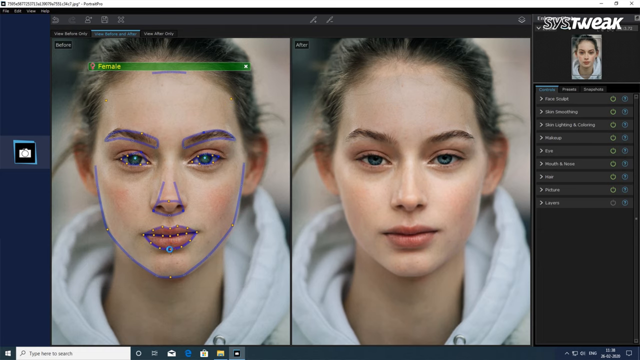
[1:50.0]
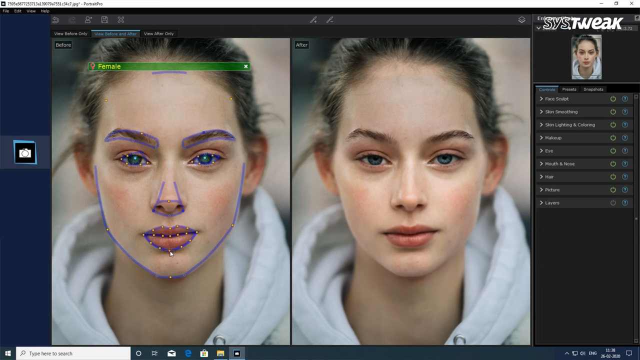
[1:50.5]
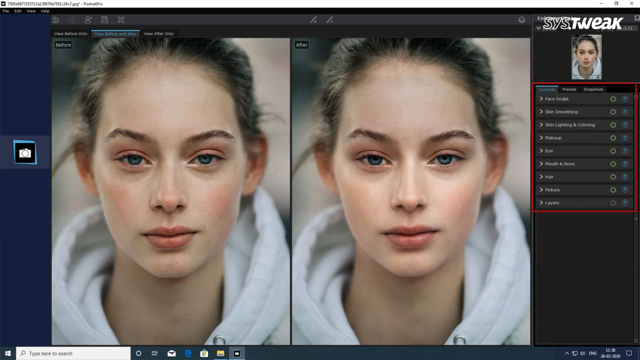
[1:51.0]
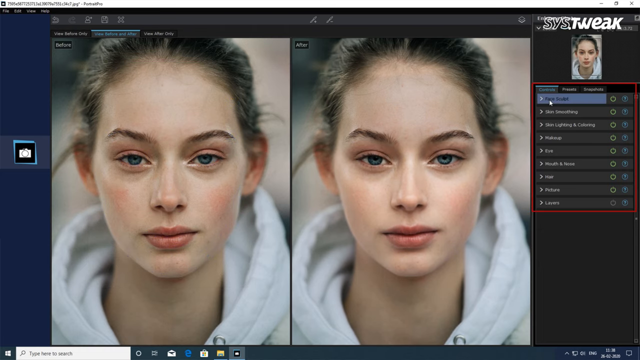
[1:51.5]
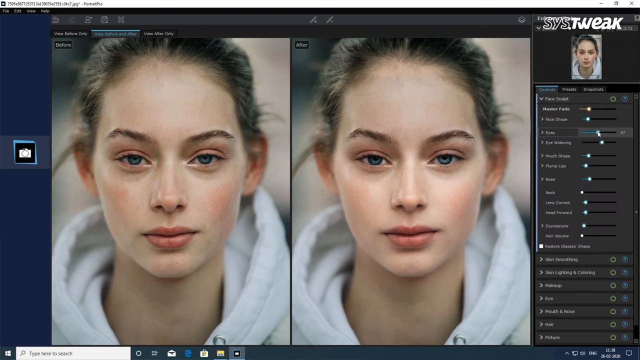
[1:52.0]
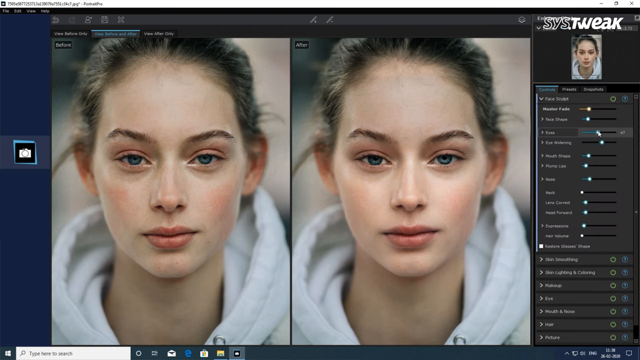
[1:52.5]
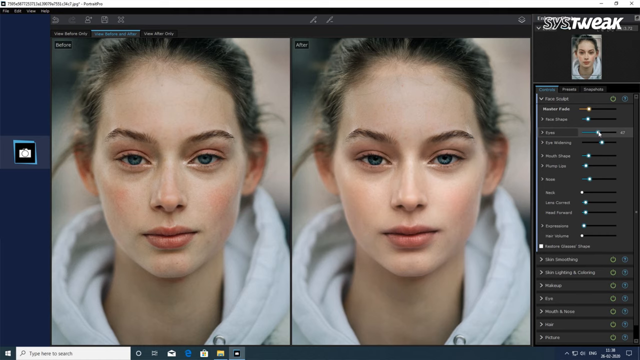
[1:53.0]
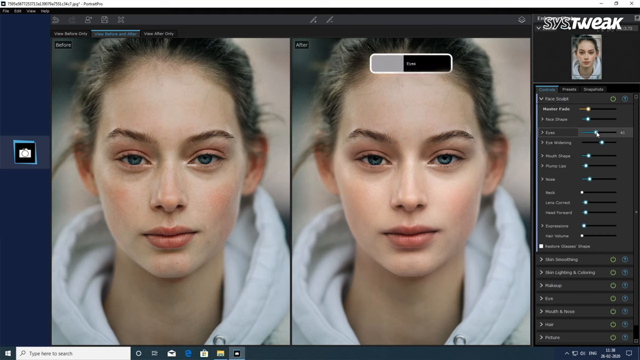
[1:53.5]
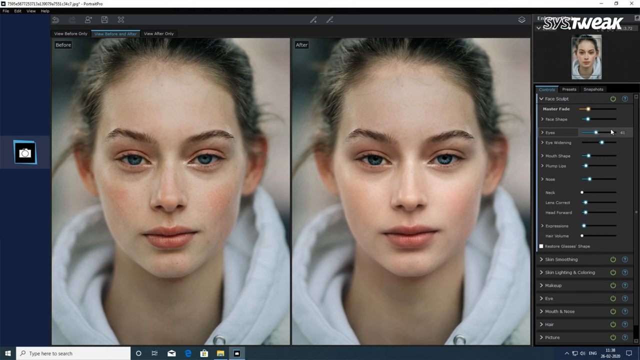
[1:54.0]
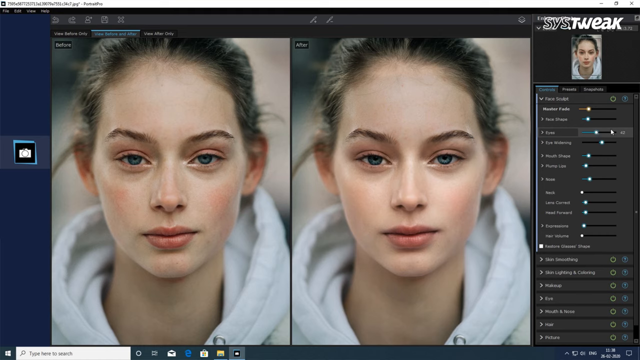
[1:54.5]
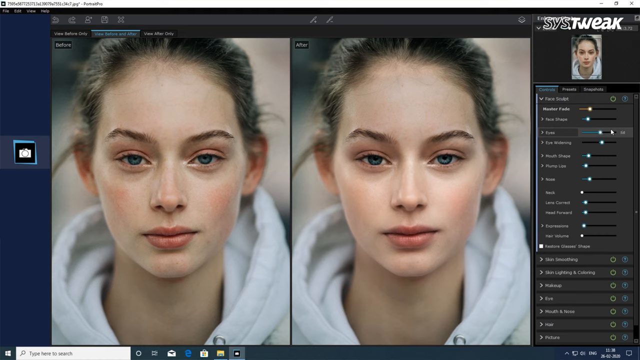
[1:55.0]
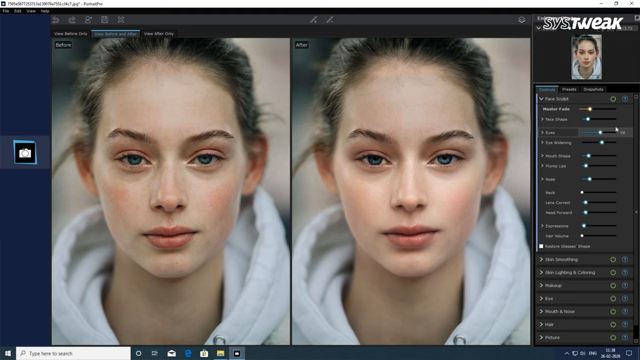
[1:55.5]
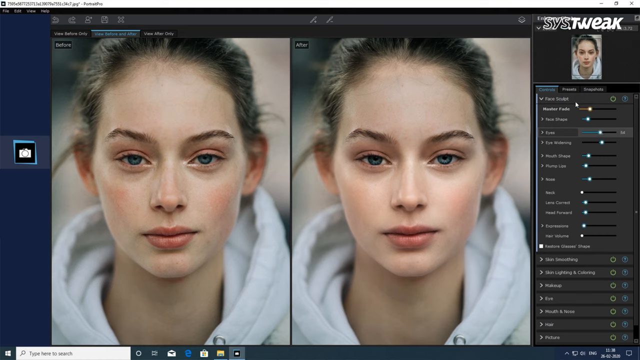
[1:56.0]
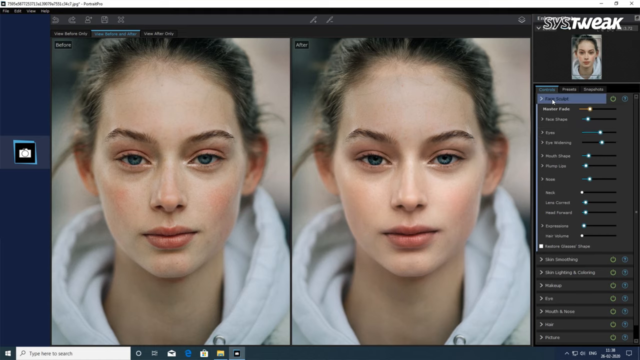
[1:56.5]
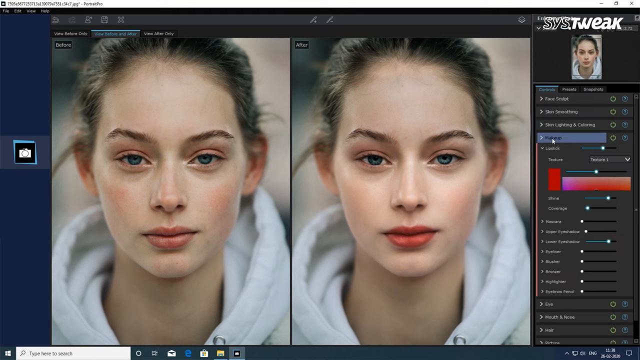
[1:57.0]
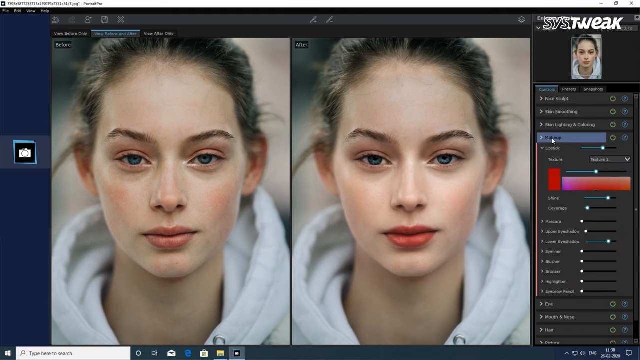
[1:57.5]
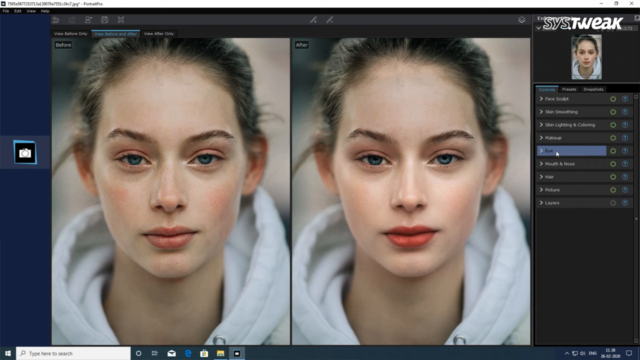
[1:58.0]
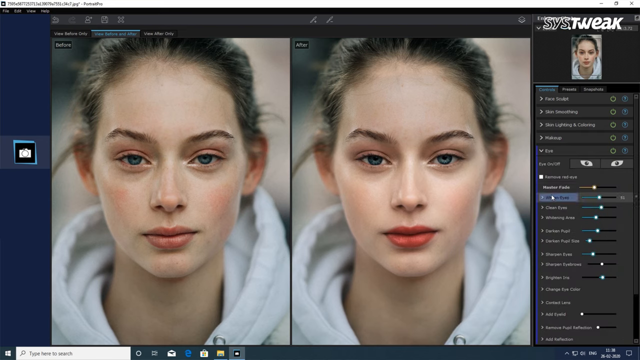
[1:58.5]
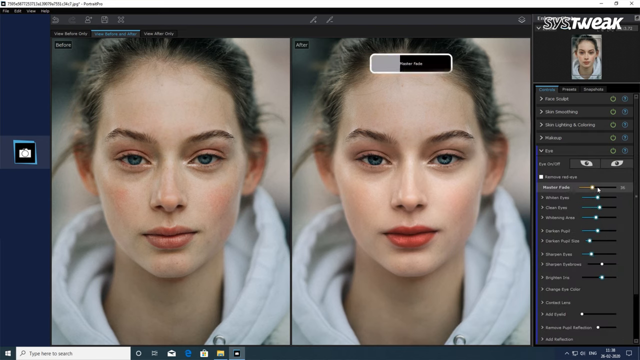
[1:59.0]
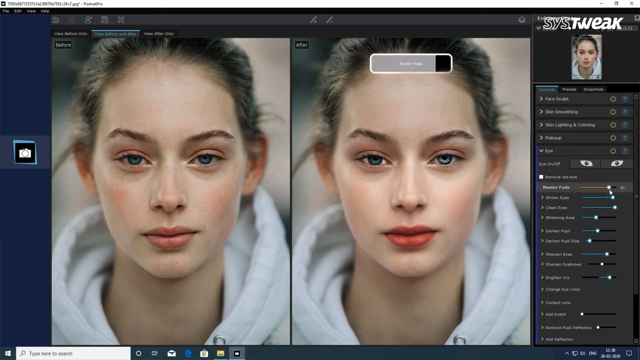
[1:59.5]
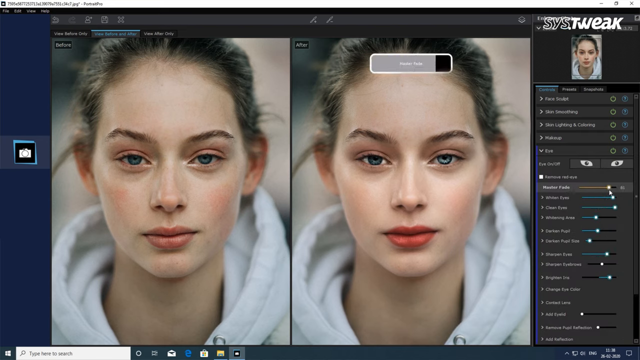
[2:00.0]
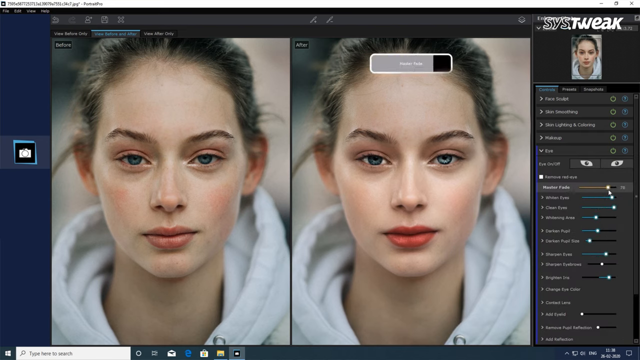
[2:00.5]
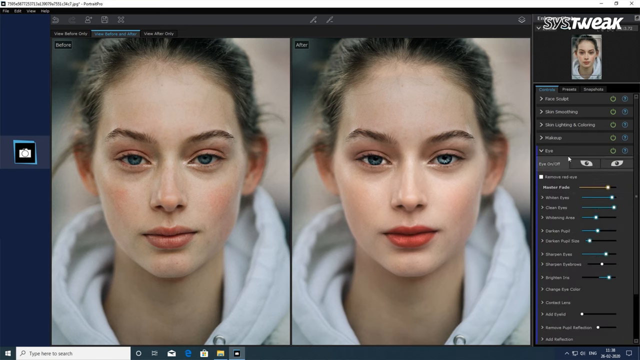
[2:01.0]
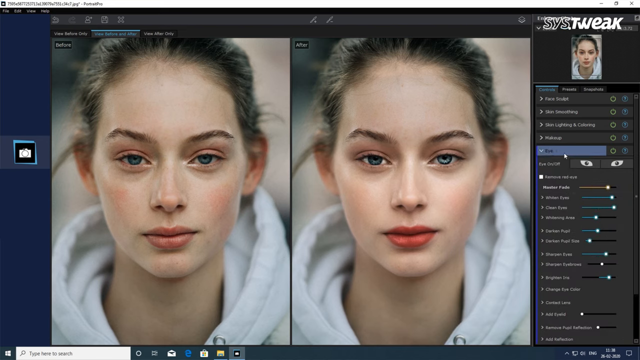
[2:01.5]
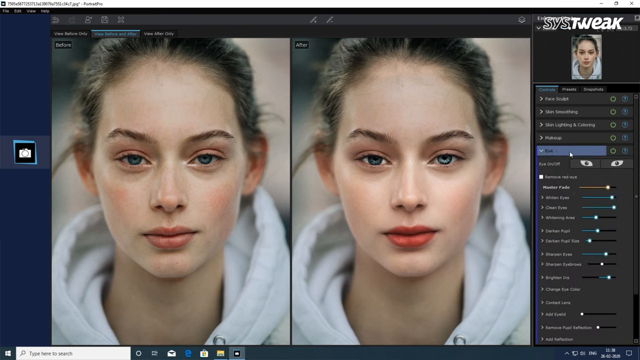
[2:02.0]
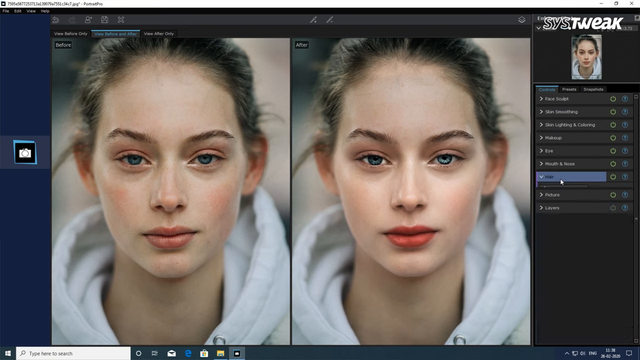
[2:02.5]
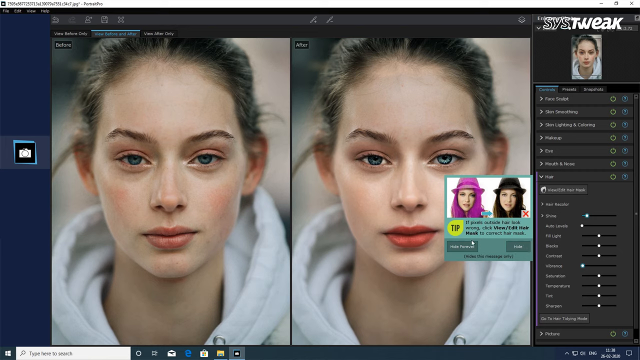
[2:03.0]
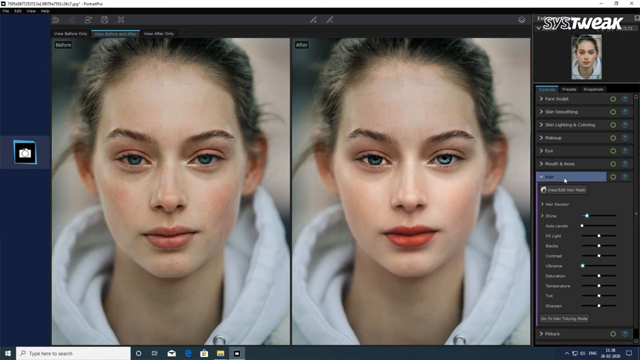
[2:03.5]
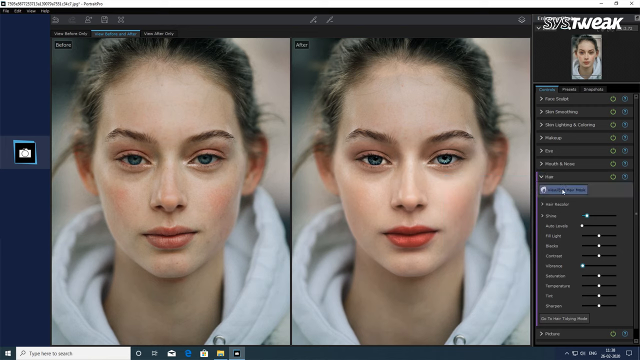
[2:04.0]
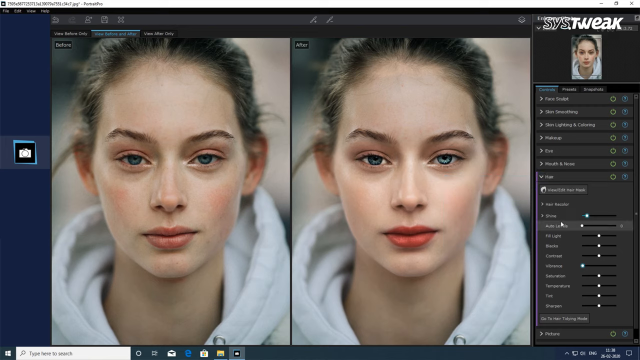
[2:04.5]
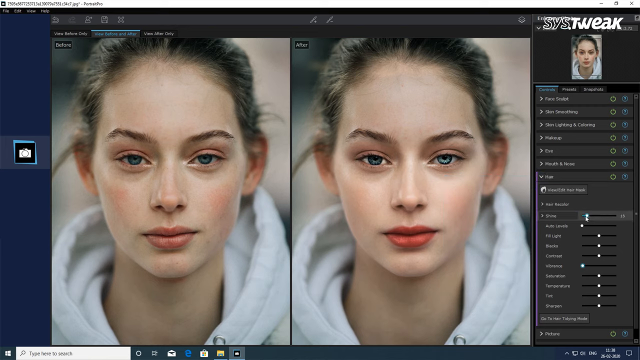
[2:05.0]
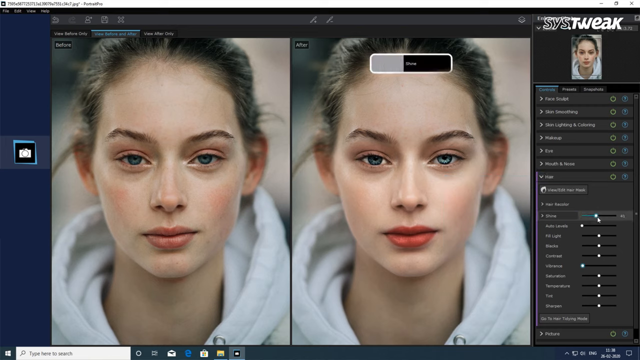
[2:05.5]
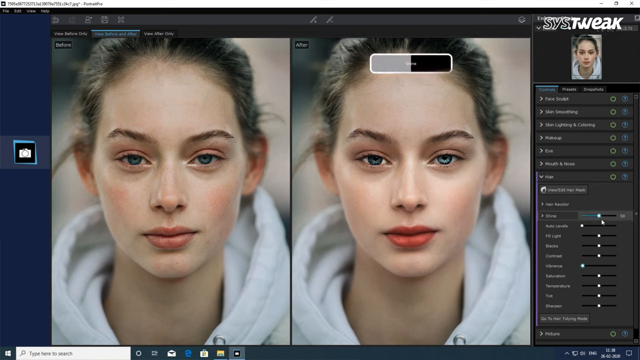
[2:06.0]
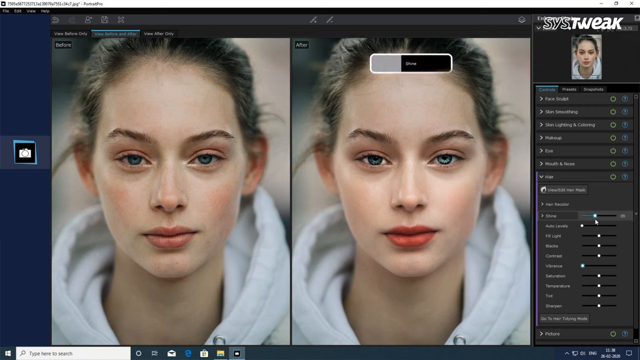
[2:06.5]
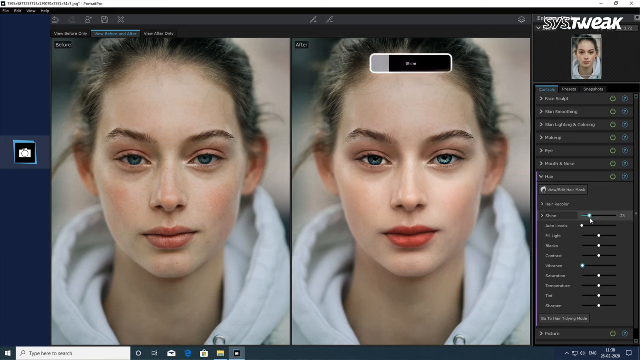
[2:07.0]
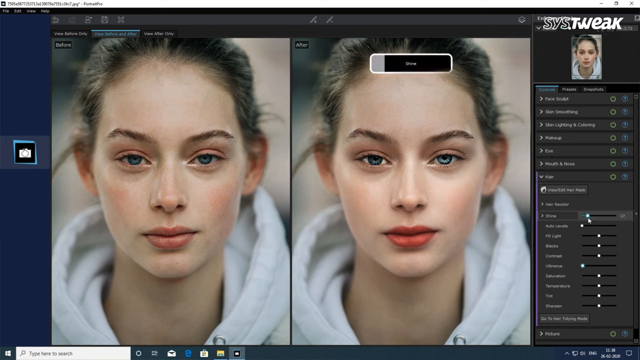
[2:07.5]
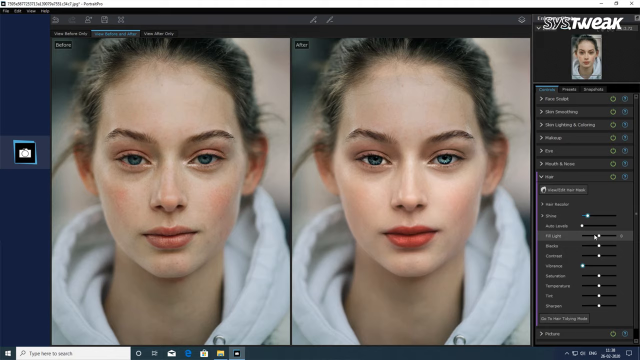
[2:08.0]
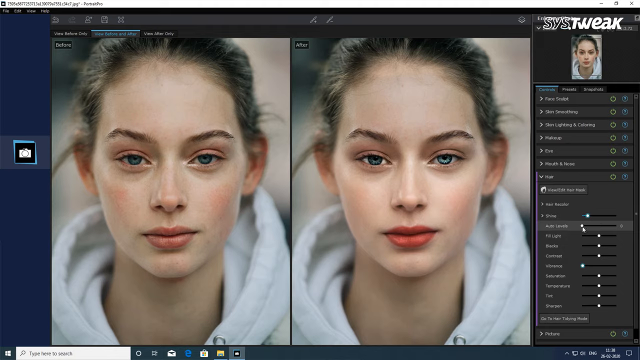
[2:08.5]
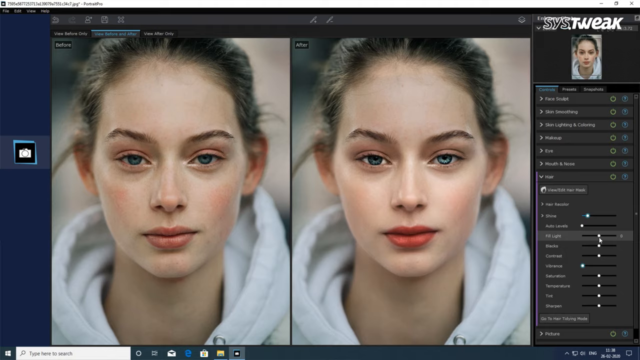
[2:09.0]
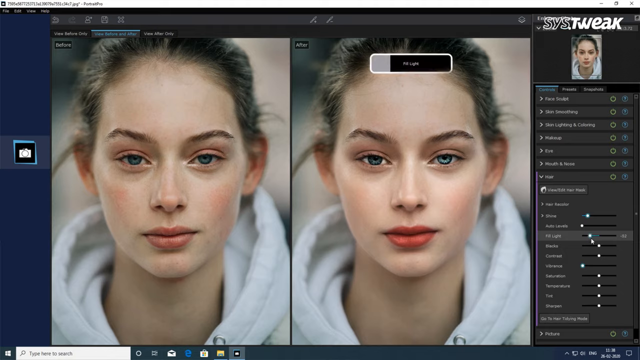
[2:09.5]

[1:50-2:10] An image shows a girl in a white hoodie sweatshirt looking right into the camera, with a marked-up version on the left showing outlines on her facial features and an unmarked version on the right. The markups disappear from the left picture, and the two pictures are shown side by side; one looks different from the other in her face, with her cheeks looking slightly more flushed. The person operating the computer uses the cursor to scroll over different editing categories and highlights several of them. Small windows and progress bars pop up as they drag a button from left to right. As they do this, the girl's eye color and other features change in the photo, and colors change as different editing categories are adjusted.